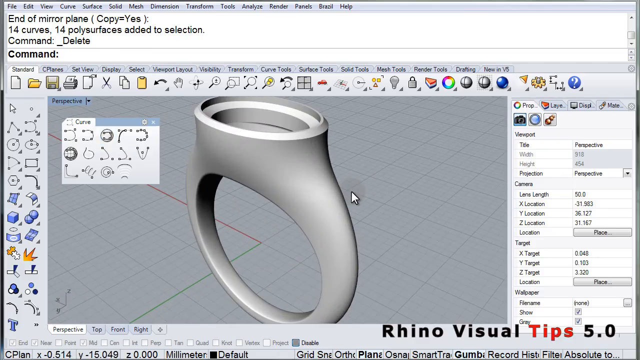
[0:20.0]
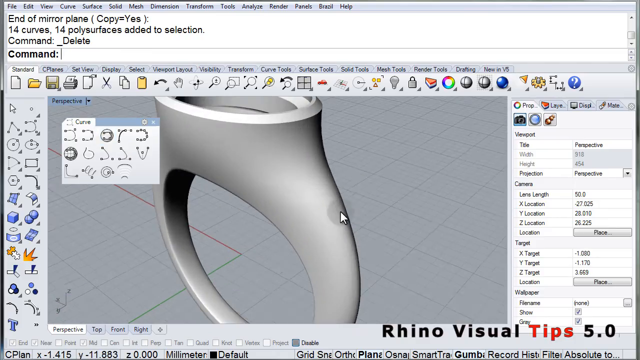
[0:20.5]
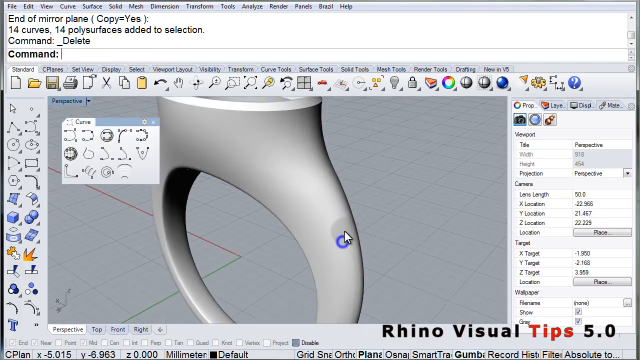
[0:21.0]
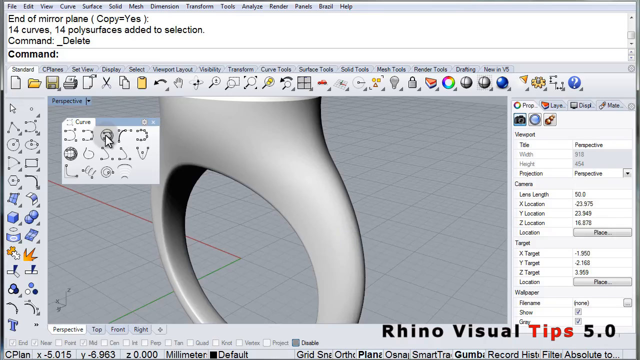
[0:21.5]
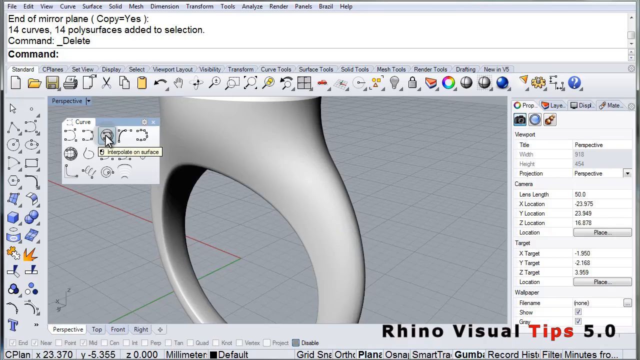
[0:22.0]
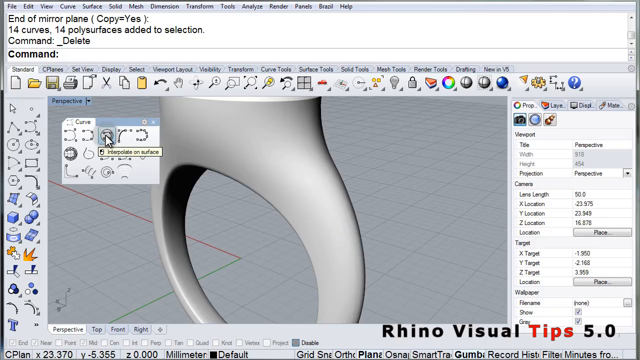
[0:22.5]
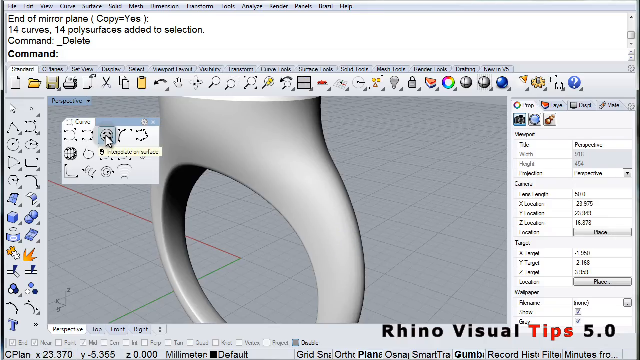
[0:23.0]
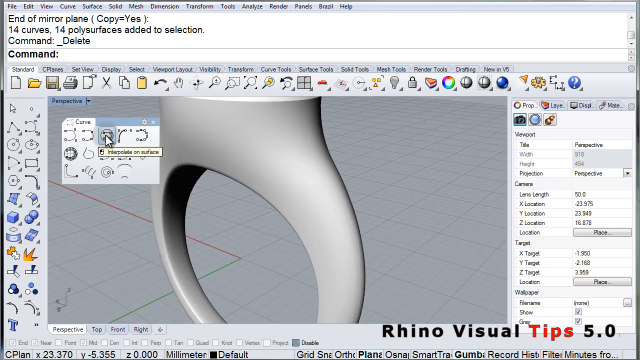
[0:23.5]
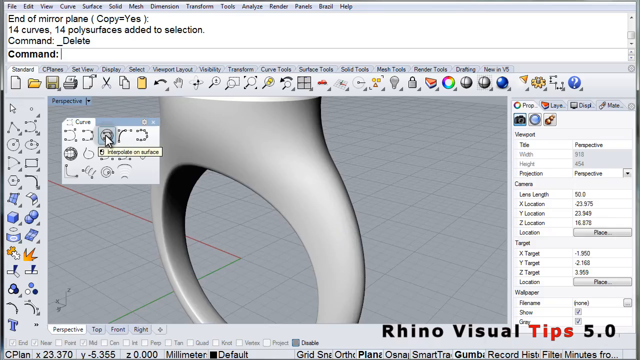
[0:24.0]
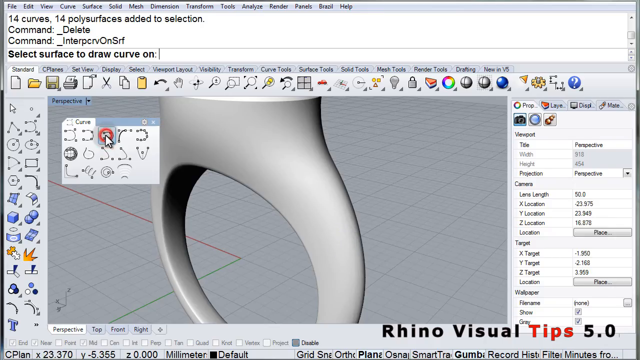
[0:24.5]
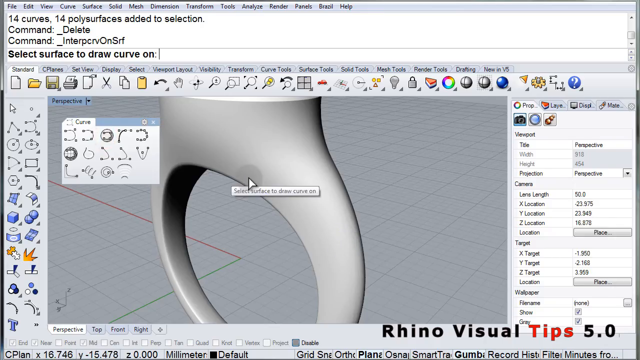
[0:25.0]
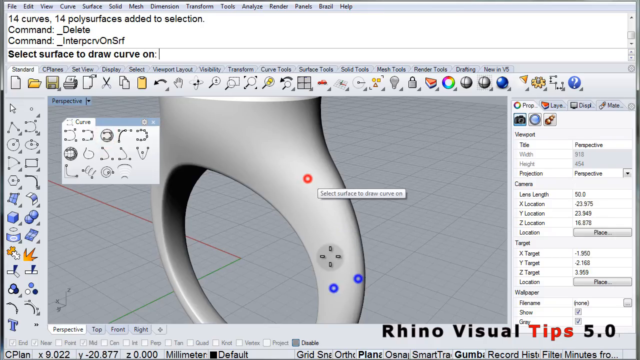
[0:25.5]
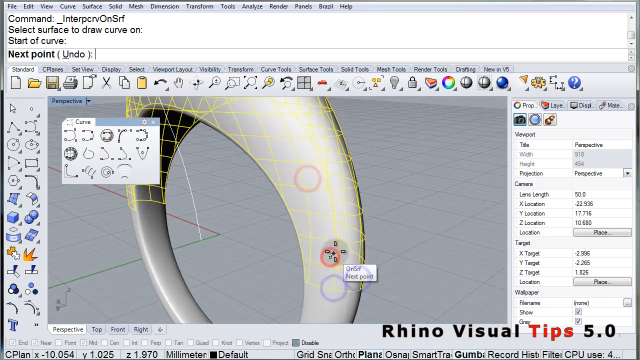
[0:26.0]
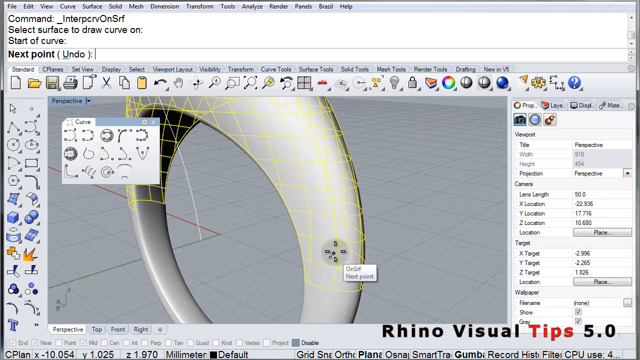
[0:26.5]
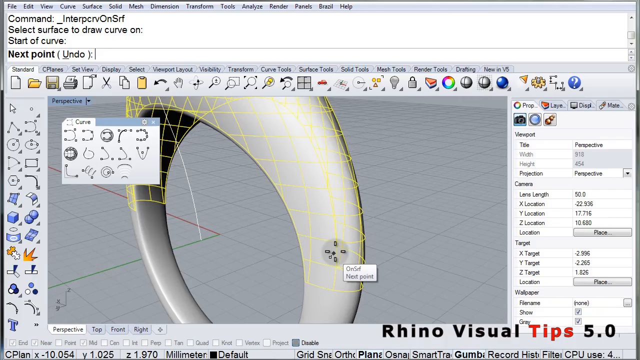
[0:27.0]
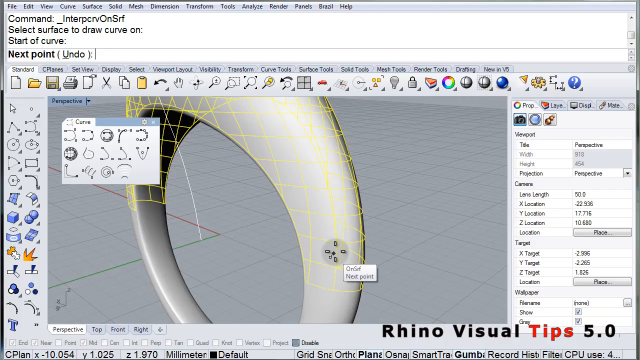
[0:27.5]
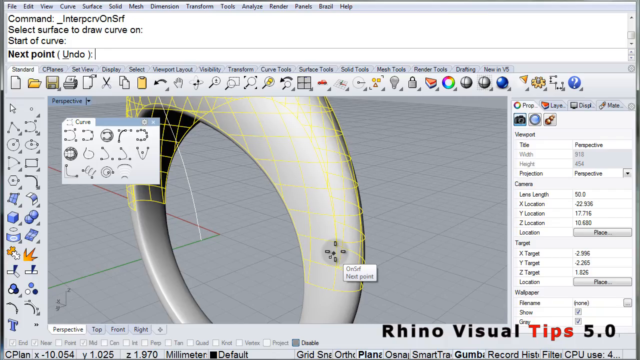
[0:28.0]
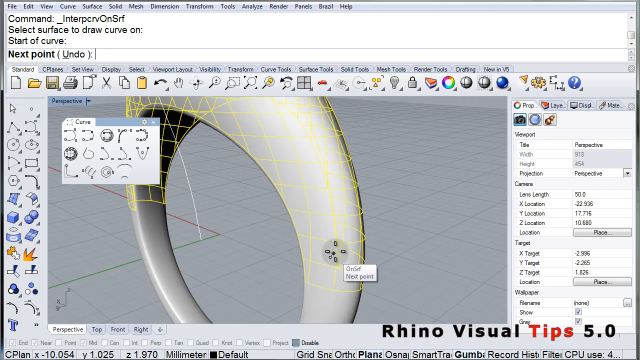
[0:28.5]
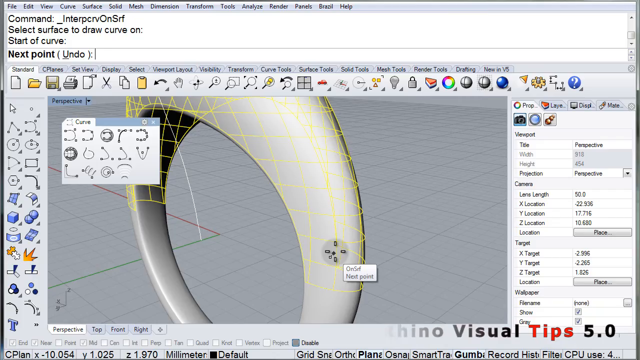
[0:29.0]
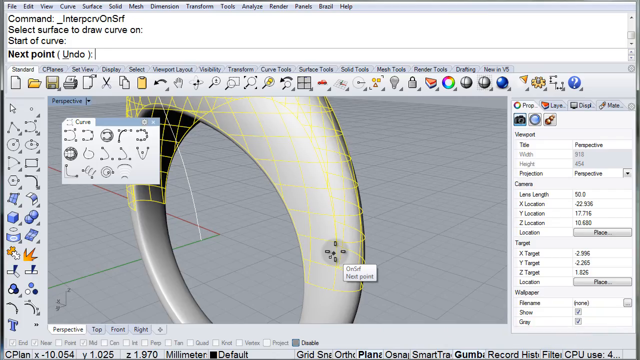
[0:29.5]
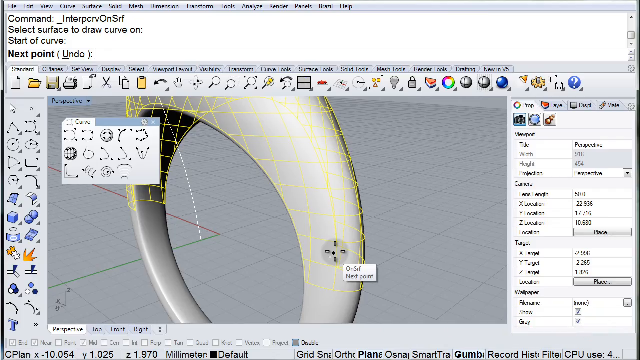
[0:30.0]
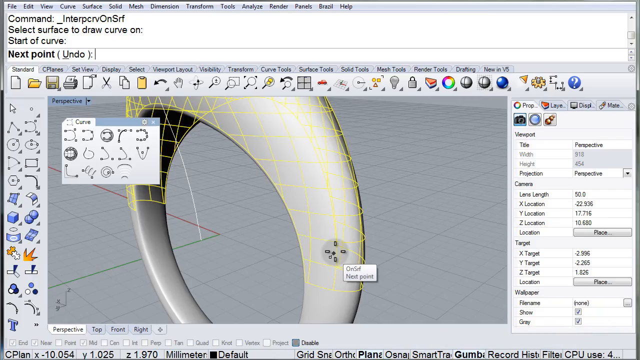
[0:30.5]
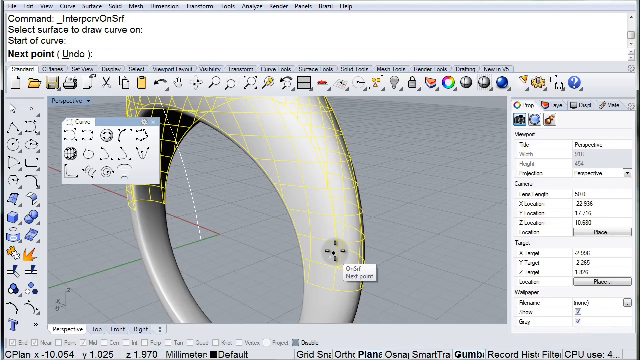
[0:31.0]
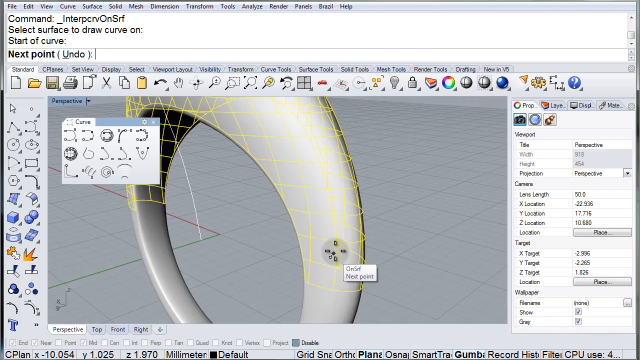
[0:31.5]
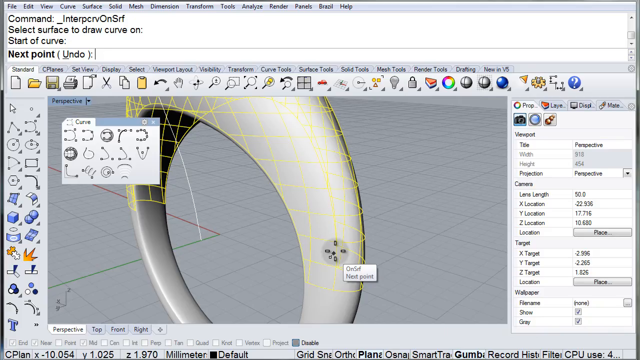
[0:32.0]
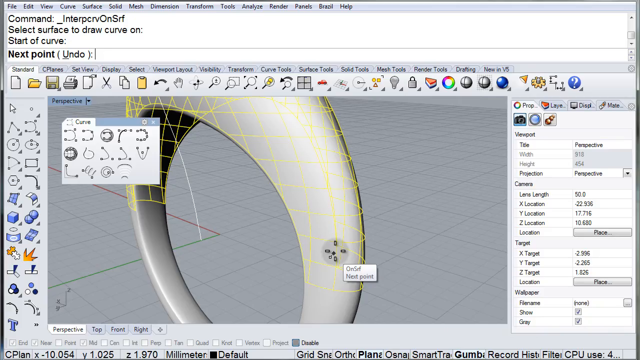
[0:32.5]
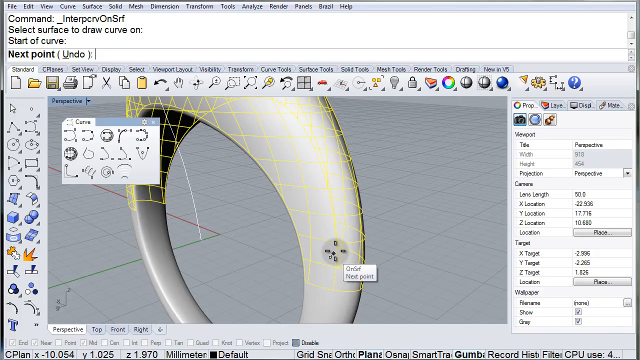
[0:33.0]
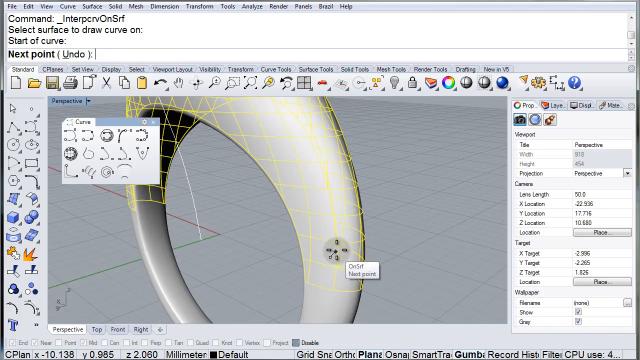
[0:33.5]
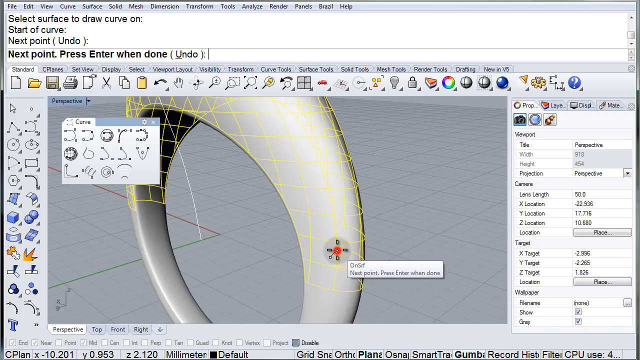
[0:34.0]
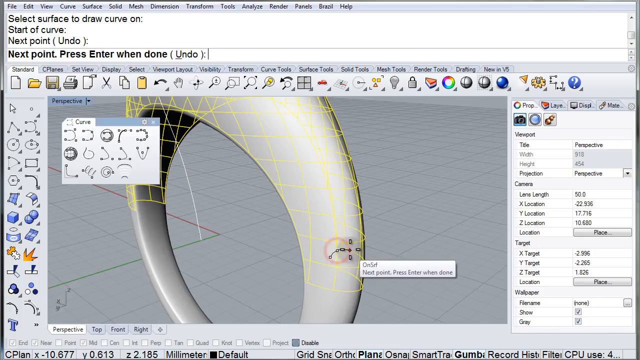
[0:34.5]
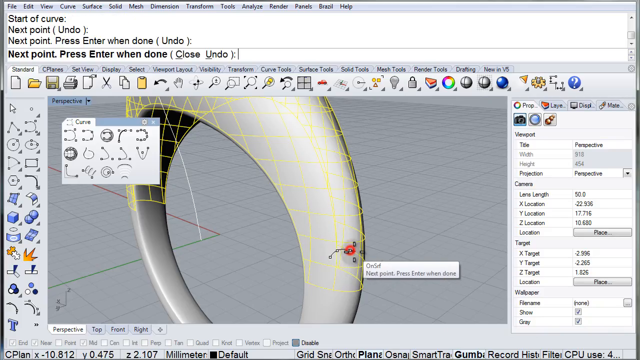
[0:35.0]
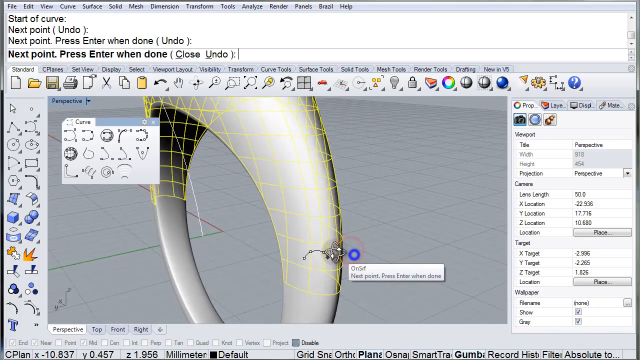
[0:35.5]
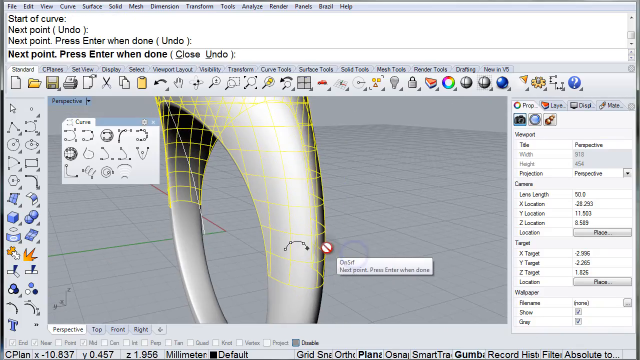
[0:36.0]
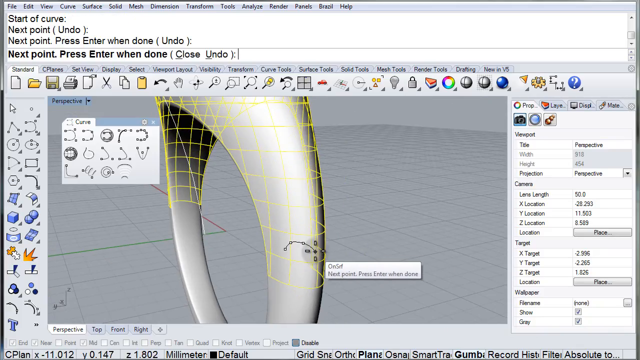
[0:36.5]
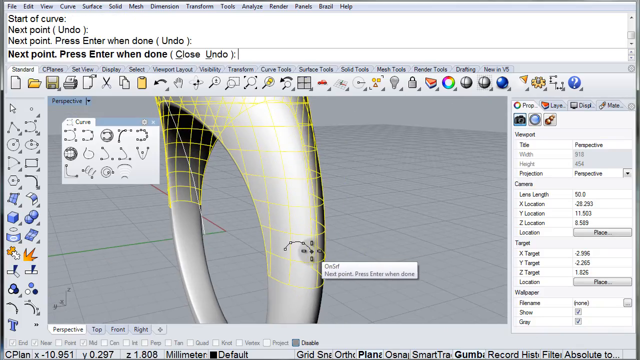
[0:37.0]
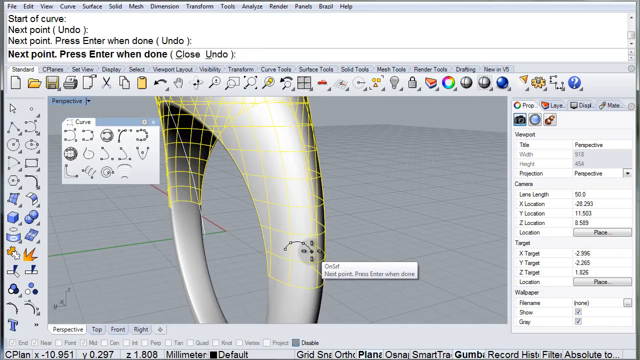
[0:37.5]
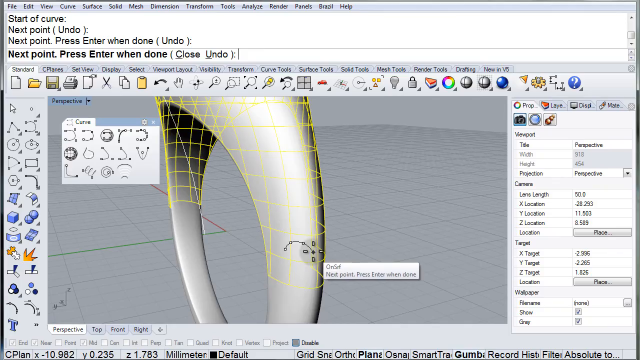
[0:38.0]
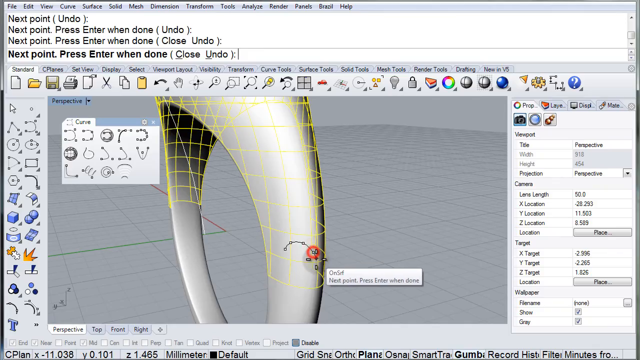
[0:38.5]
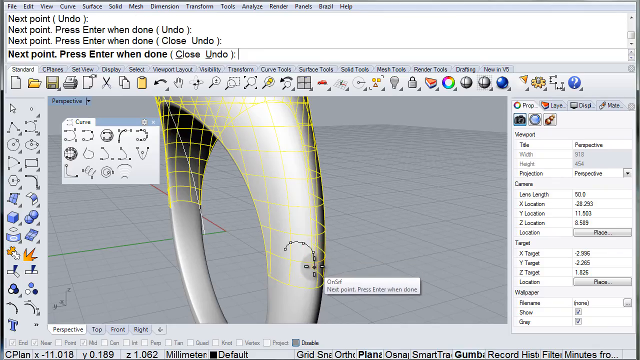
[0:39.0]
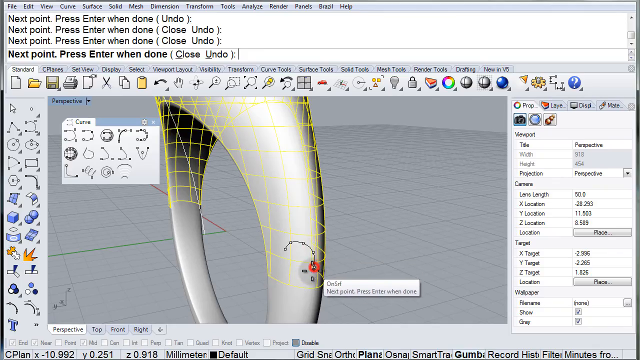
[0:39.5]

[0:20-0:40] The mouse clicks on the Interpolate Curve on Surface tool, and the view zooms in on the ring so that only its curve is visible. When the mouse clicks on the ring shank, a few red and blue circles pop up, and then a yellow grid appears overlaid over the top half of the curve of the ring shank. A small text box by the mouse pointer reads "on SRF next point". The mouse clicks on the ring shank several times, kind of around in a circle, and points appear where it clicks, joined by connecting lines that follow its path in roughly a half circle, counterclockwise. The clicks are on the right side of the ring shank, as seen by the viewer, about halfway up, around the widest point of the curve.